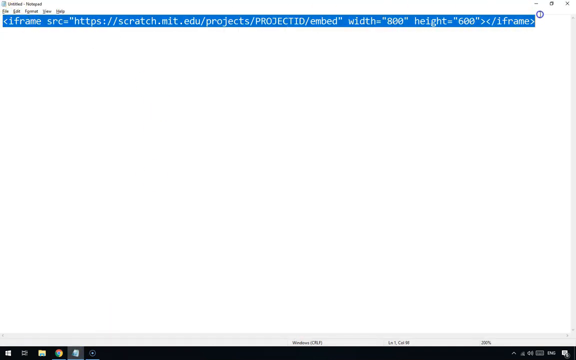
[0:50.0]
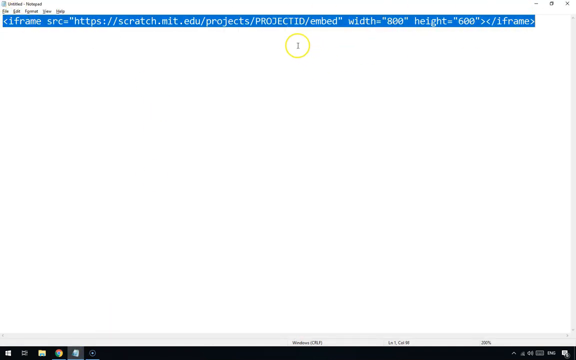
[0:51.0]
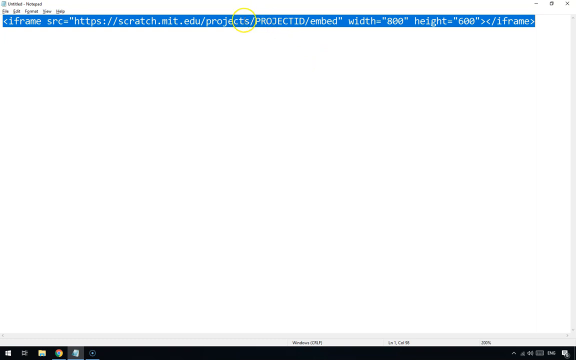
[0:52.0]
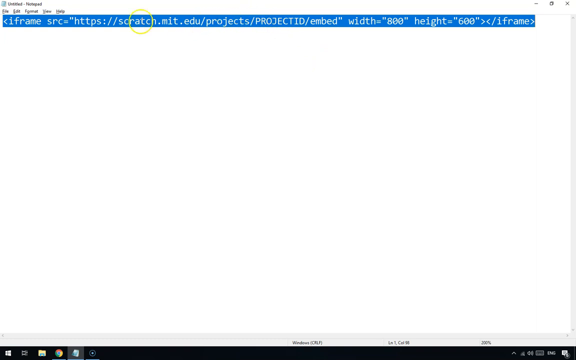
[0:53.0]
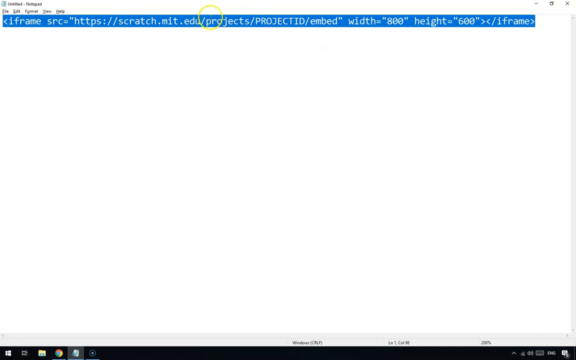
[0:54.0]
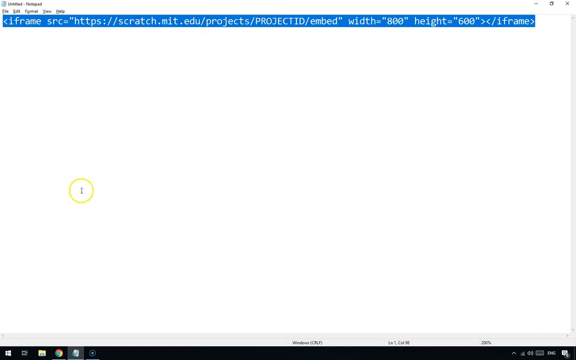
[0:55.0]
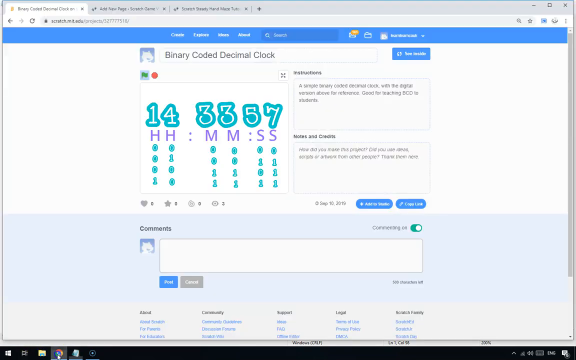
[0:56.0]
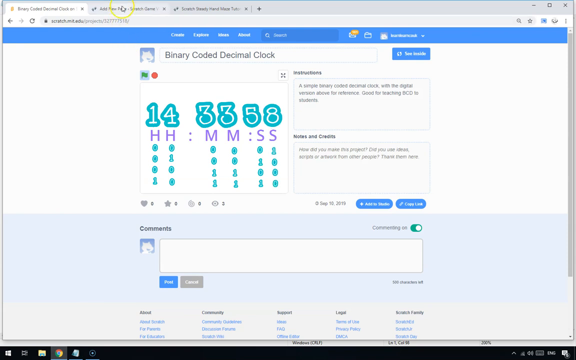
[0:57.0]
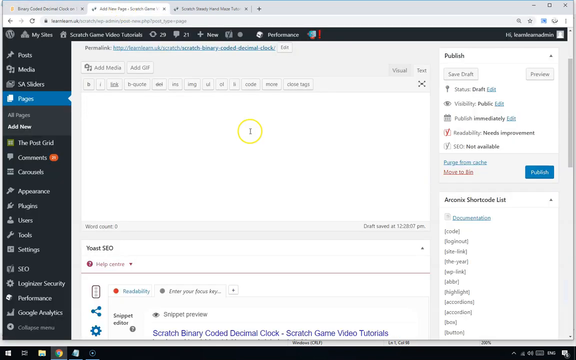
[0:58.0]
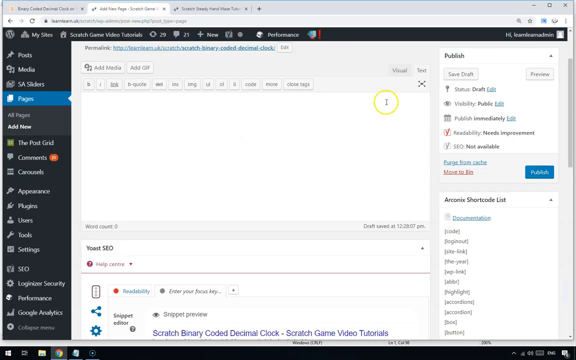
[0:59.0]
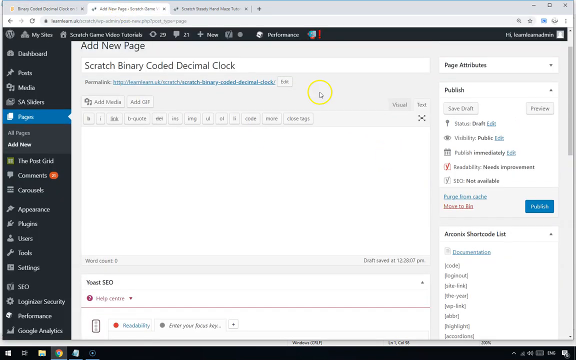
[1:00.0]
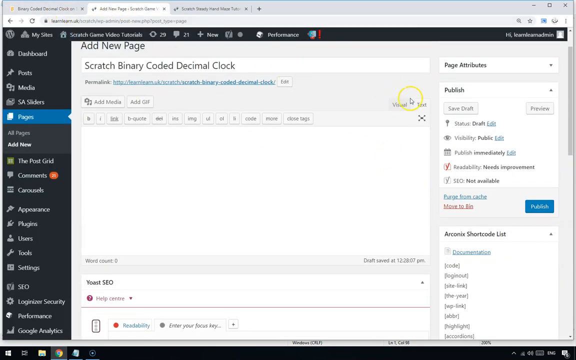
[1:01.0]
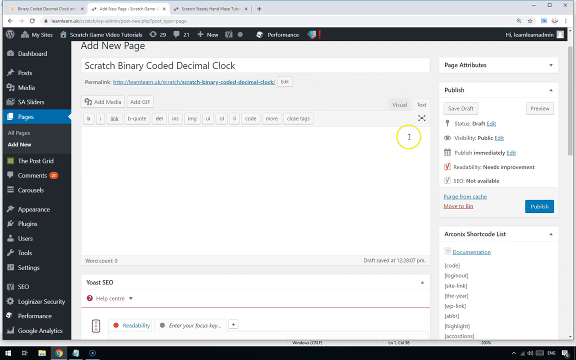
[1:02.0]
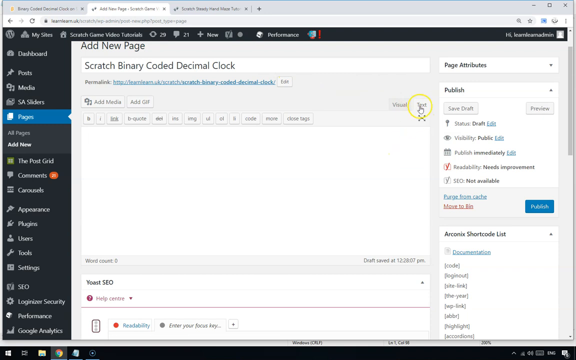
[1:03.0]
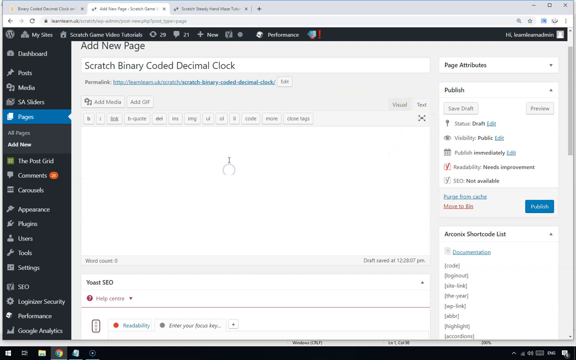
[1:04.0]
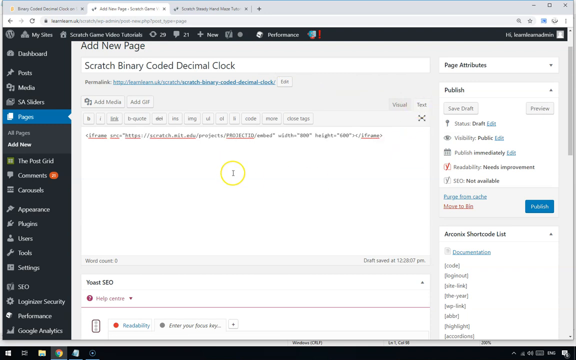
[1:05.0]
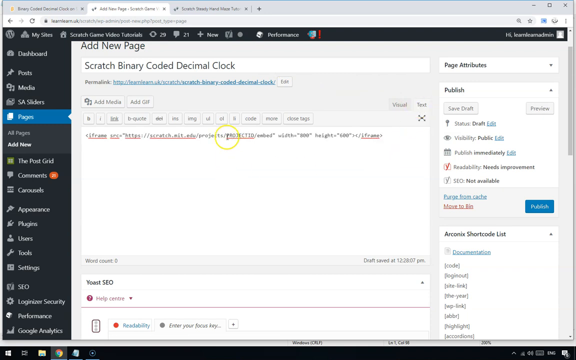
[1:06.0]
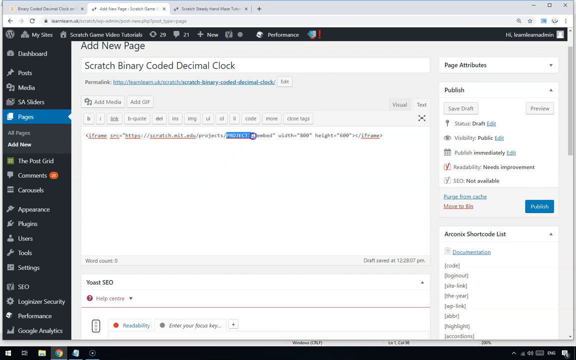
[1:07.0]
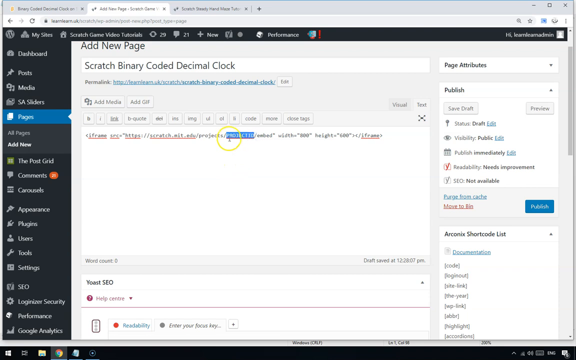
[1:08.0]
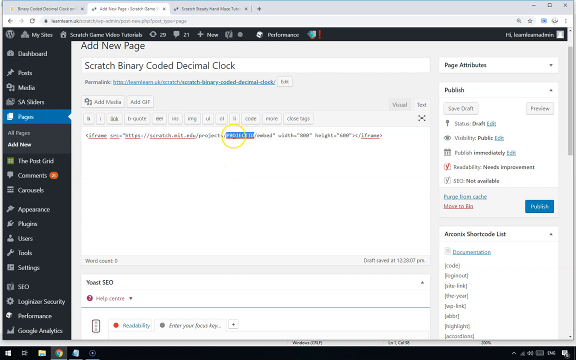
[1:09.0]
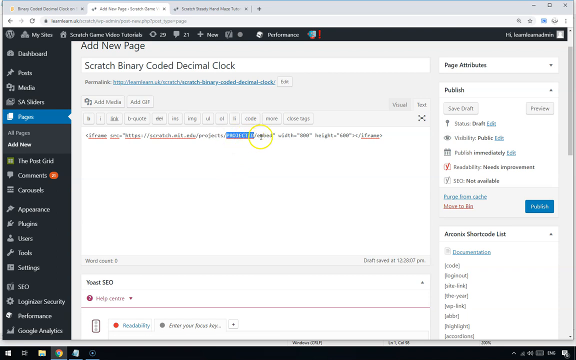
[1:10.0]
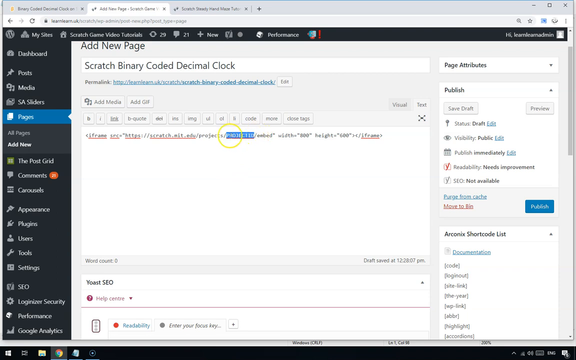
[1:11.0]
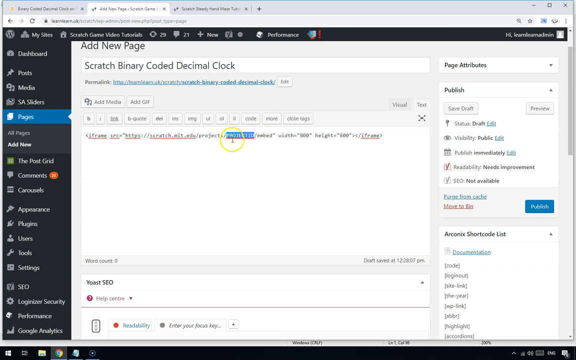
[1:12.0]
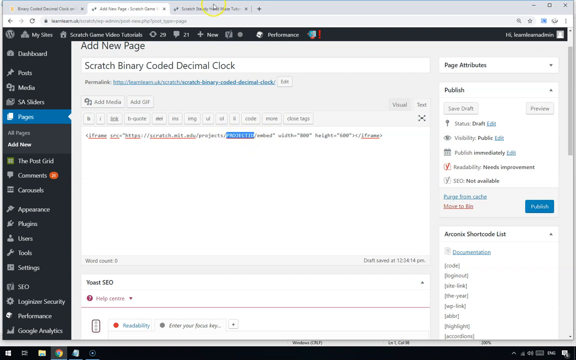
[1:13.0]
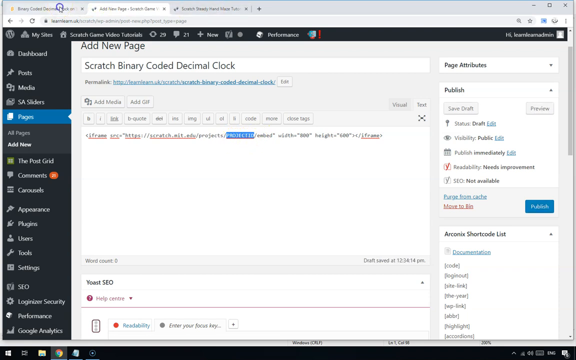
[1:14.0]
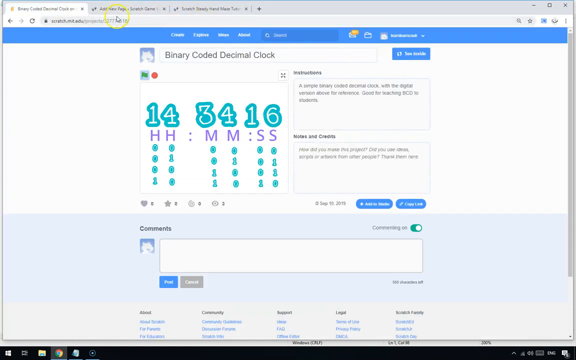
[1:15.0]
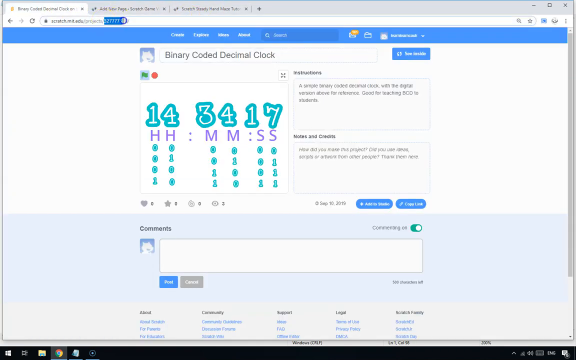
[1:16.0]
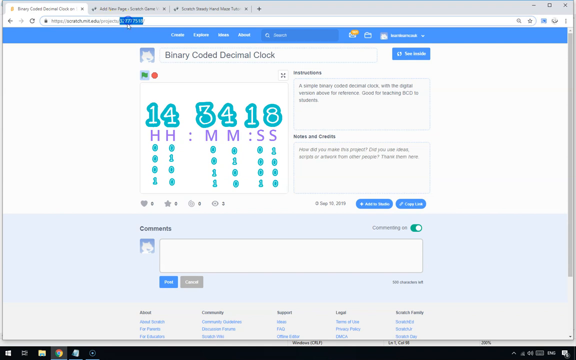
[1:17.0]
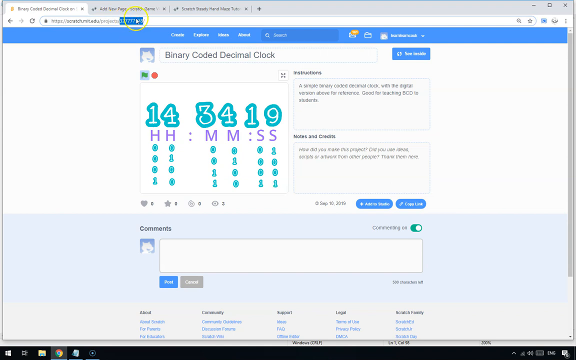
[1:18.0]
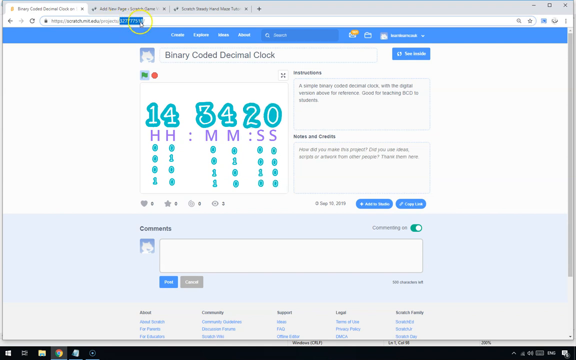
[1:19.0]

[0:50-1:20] With the file path highlighted, the cursor moves over the colon in the website's "https://" and then highlights the slash between EDU and projects. The cursor moves down and the binary coded decimal clock page returns. The middle tab is clicked, the page is scrolled up, and on the far right a tab that says "text" is clicked. The big window is clicked and the file path is pasted in, with parts of it underlined in red. The word "projected" is highlighted and the mouse hovers left and right over it, then hovers over it once more. The binary coded decimal clock tab is clicked, the numbers at the end of the URL are highlighted, and the cursor moves left and right over them several times.